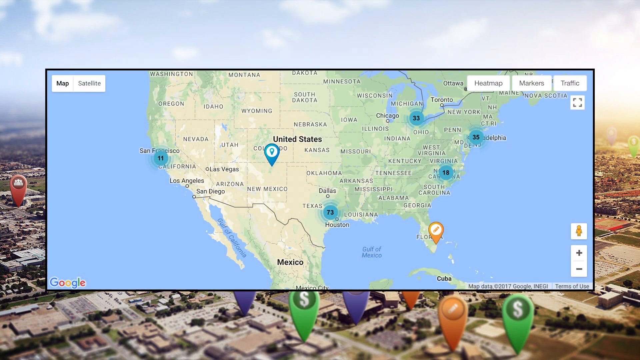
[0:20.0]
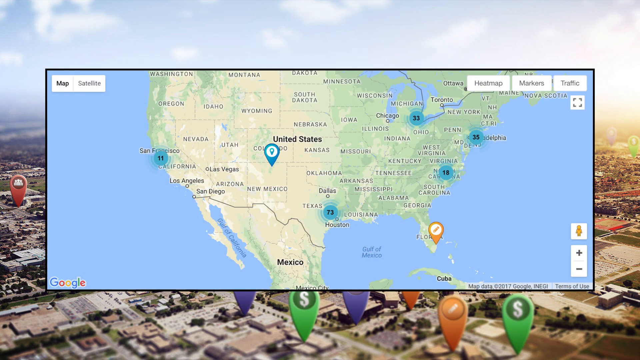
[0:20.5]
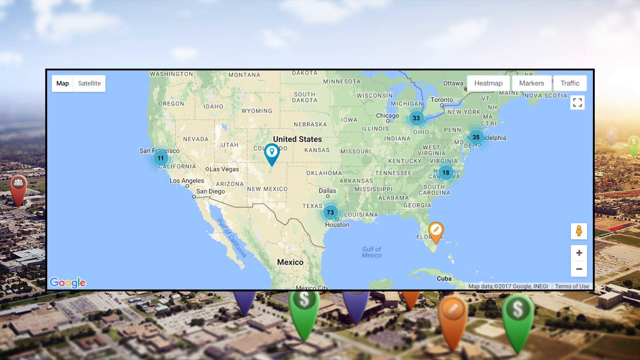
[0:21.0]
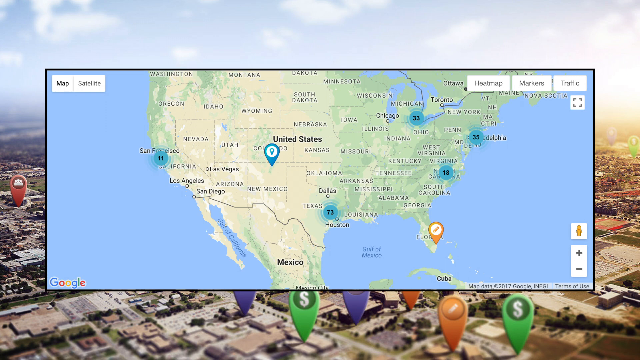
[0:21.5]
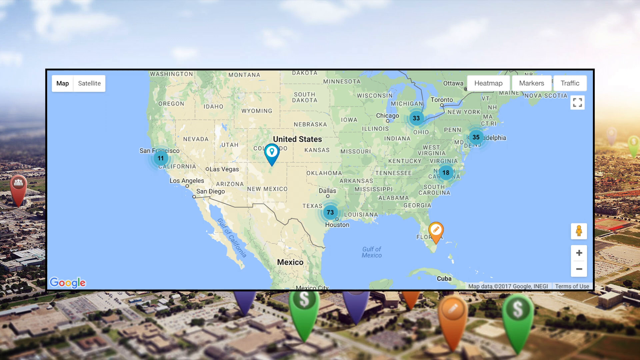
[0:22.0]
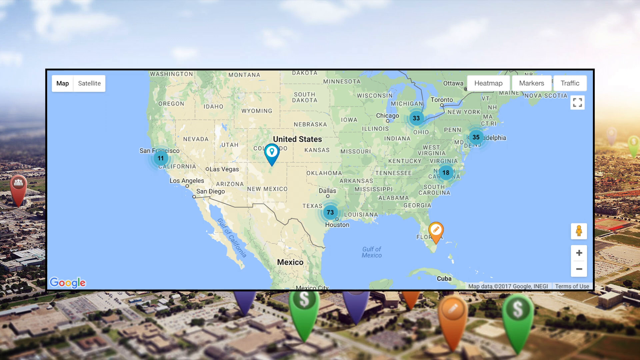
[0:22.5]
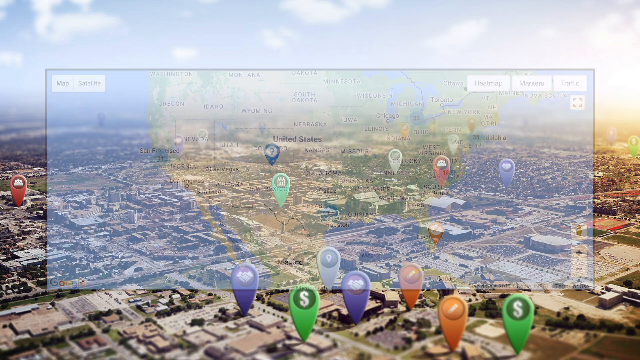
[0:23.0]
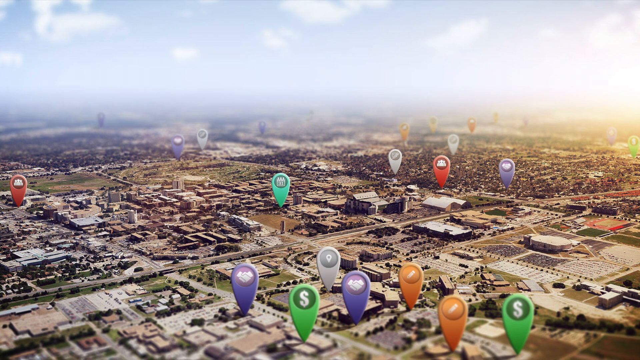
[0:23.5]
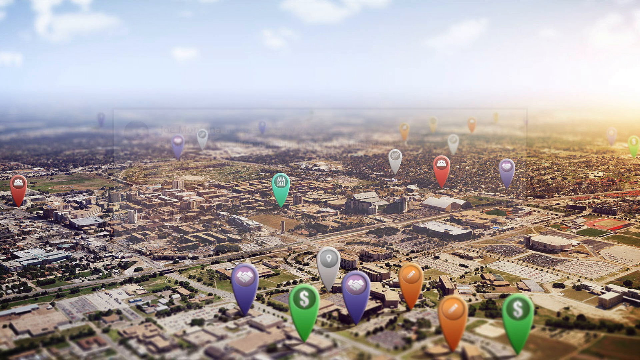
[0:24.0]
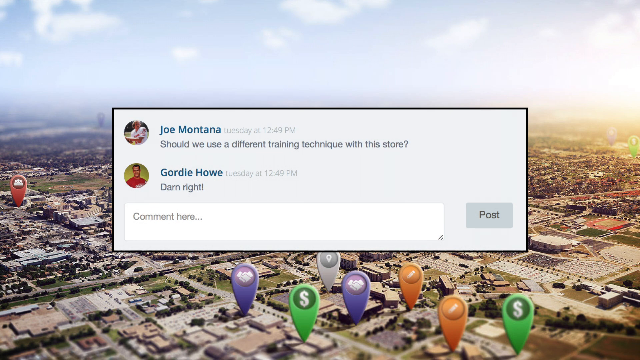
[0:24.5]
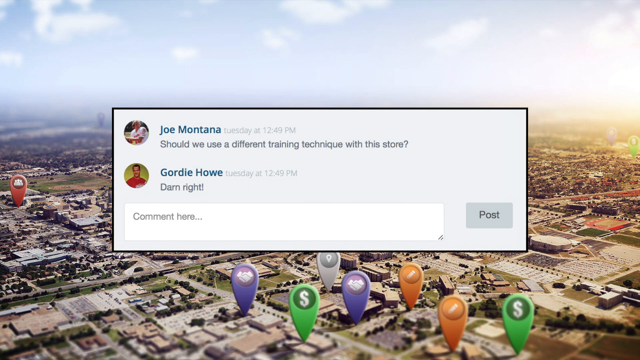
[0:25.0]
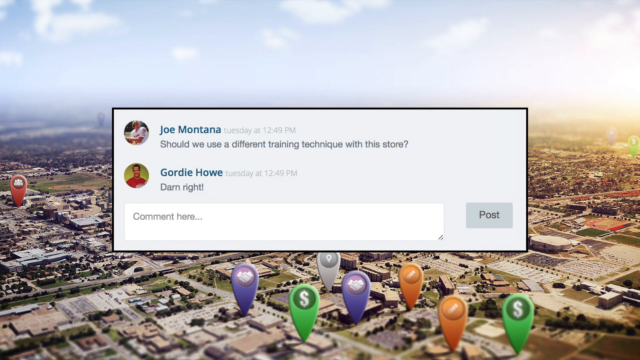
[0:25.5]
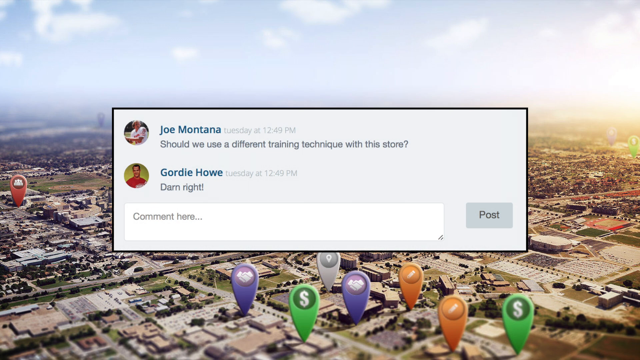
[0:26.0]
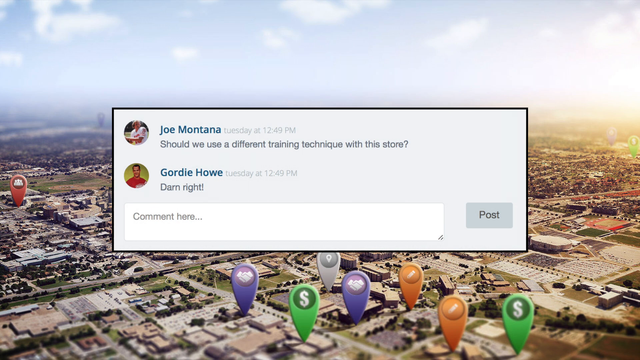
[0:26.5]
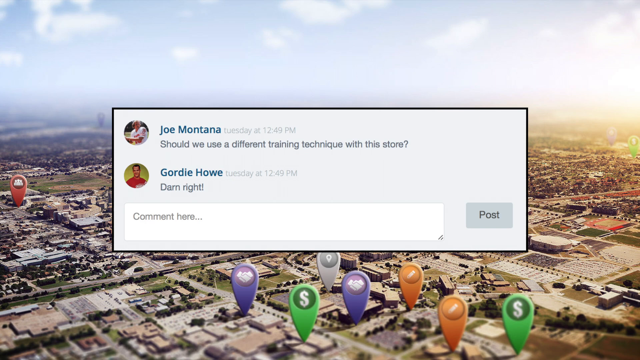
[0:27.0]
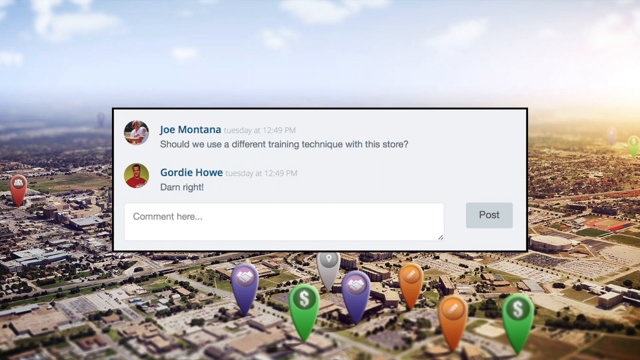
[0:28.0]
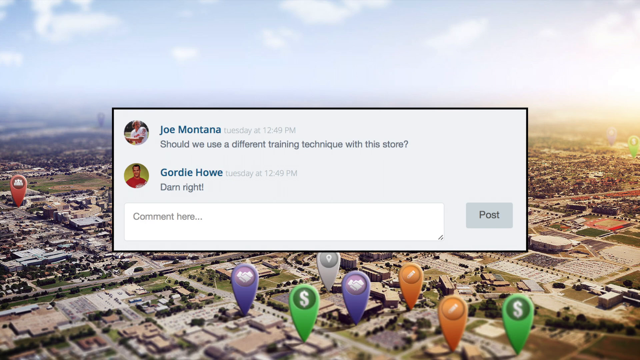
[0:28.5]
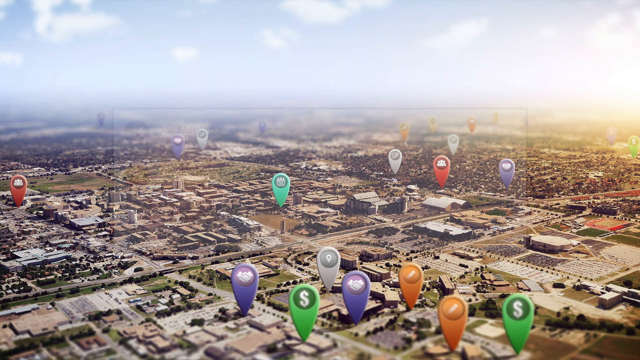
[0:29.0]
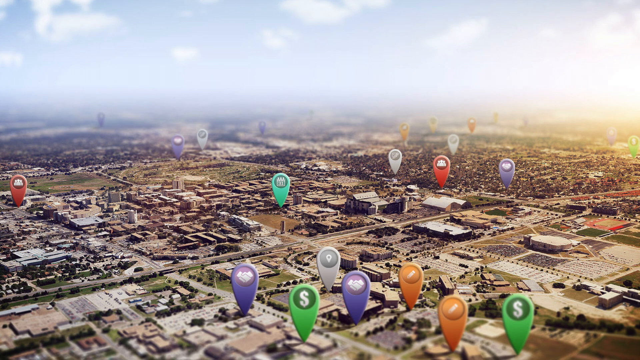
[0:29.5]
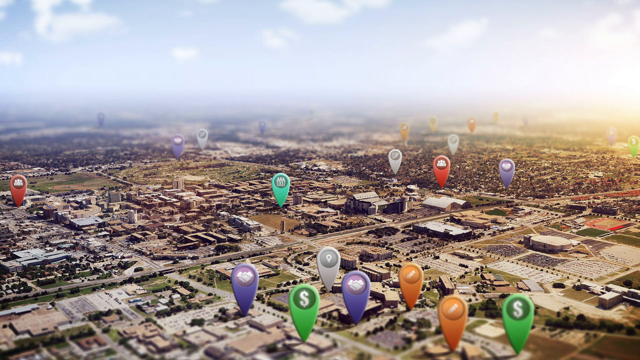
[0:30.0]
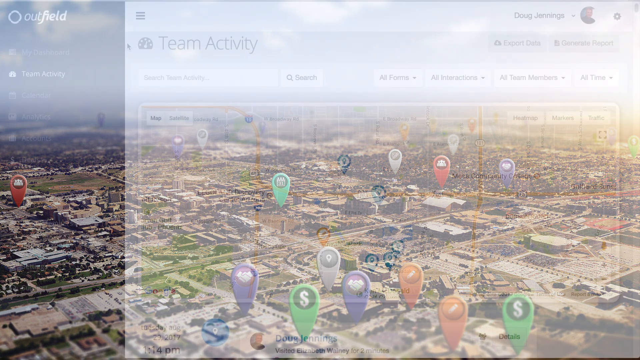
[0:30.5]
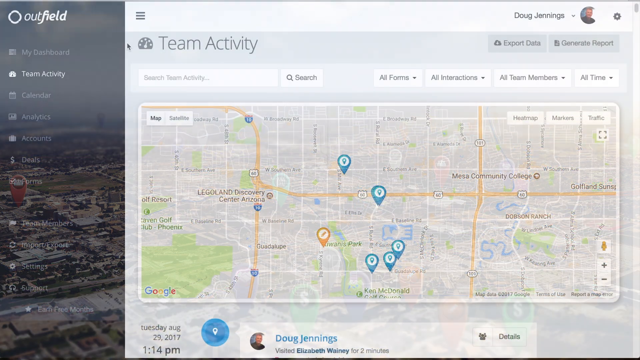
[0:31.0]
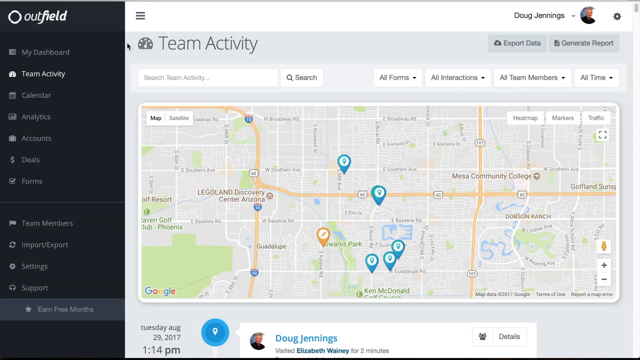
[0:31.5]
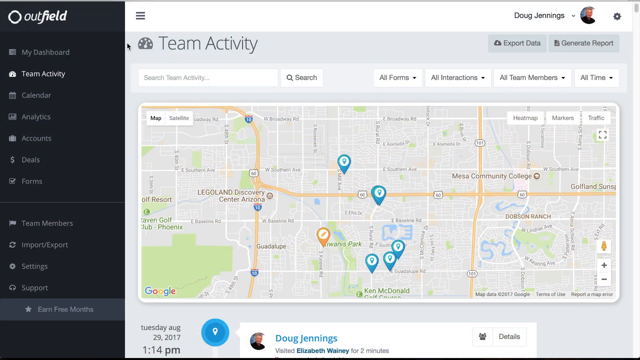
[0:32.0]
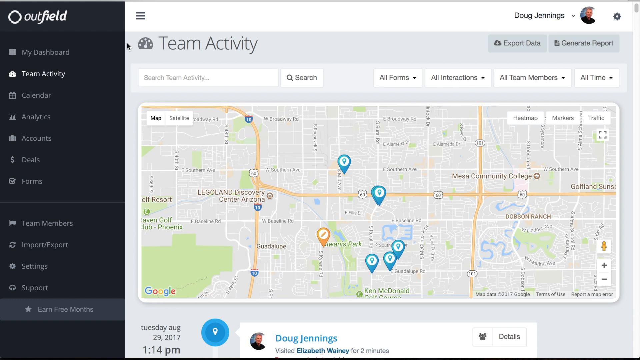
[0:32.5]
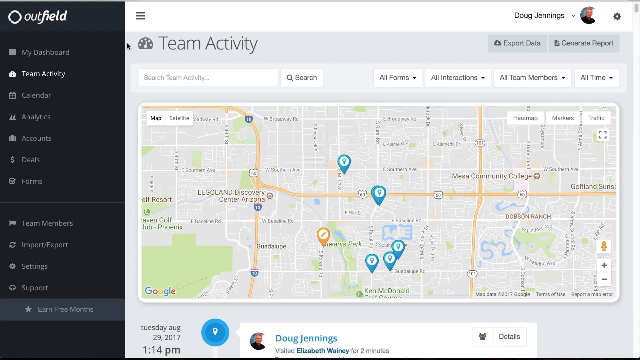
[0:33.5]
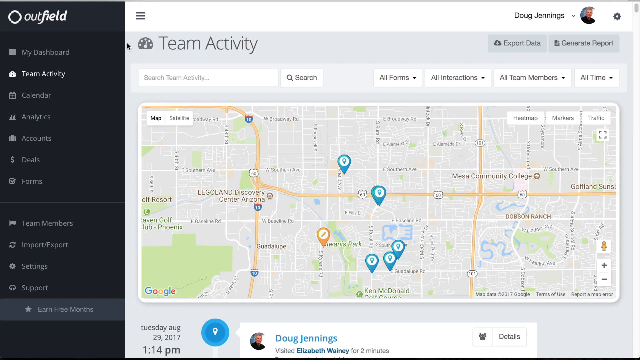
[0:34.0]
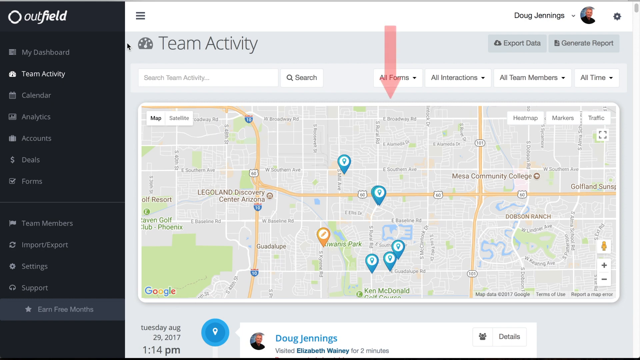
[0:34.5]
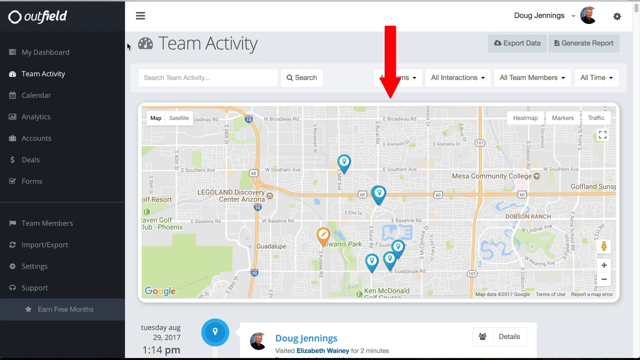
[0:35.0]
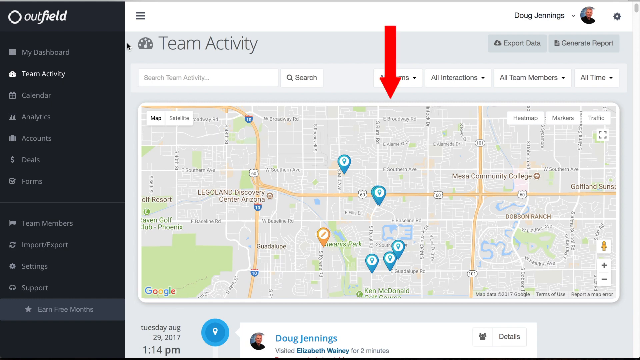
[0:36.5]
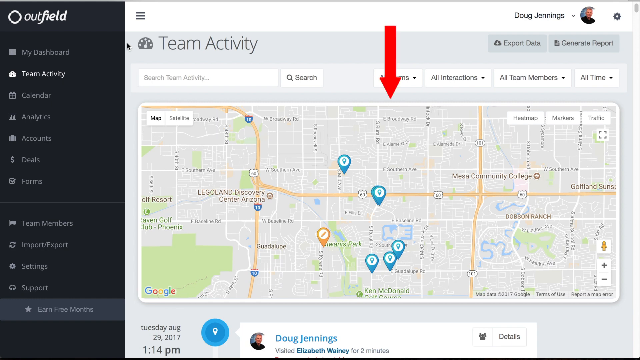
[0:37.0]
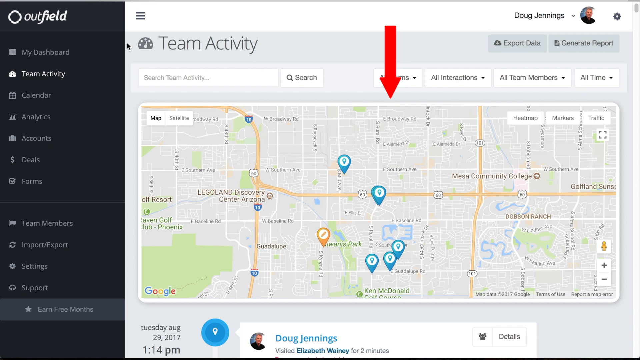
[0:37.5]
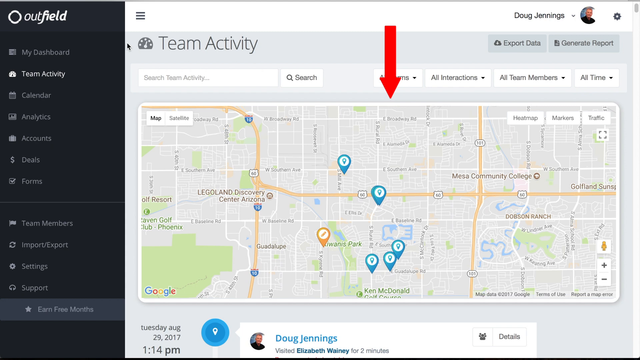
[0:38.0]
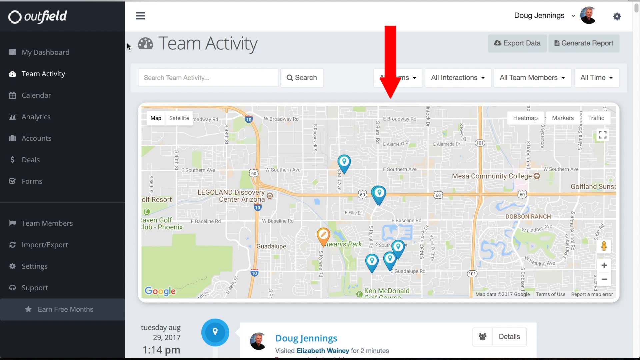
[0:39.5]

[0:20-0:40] The aerial view of houses and properties is still visible, and above it is a map that appears to be Google Maps: the lower right-hand corner shows a copyright symbol and "2017 Google", and the lower left-hand side shows the word "Google". The map shows the U.S. in green, with water such as the Gulf of Mexico, along with Houston, Louisiana and Florida. Pins show numbers such as "73" and "11". Posts that look like social media posts appear: one from Joe Montana, "Tuesday at 12 49 p.m.", reads "should we use a different trainer technique with this store?", and one from Gordie Howe, "Tuesday at 12 49 p.m.", reads "darn right". Then the posts disappear. Next, the person is in Outfield, and the screen says "team activity". A red arrow points down, almost to the middle of the map, where the streets are blurry.